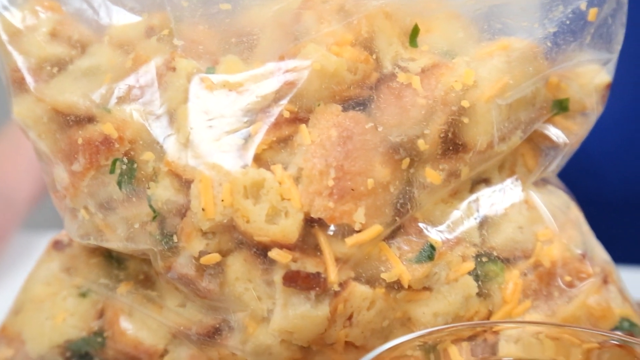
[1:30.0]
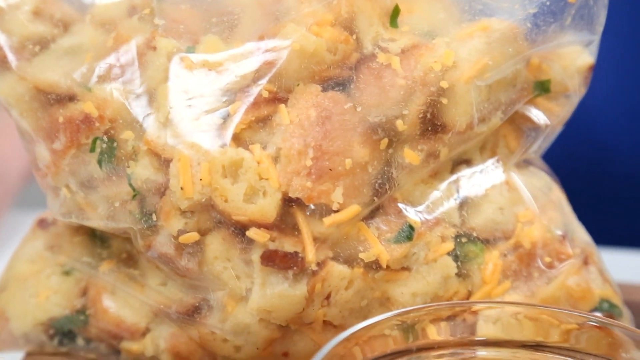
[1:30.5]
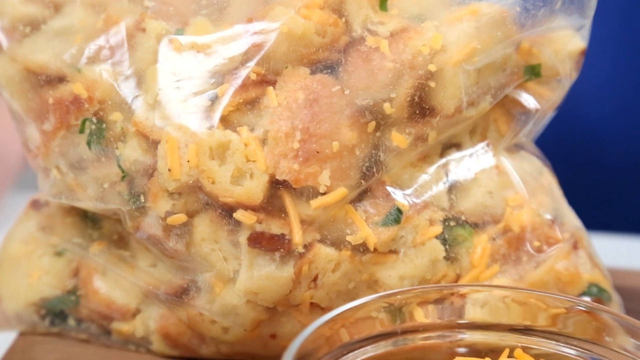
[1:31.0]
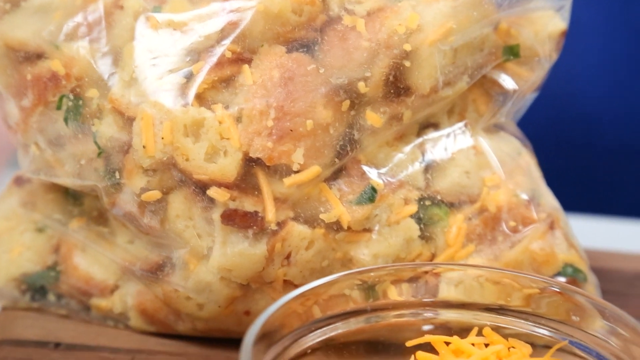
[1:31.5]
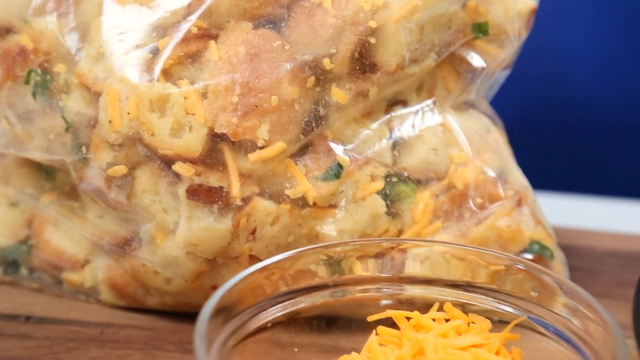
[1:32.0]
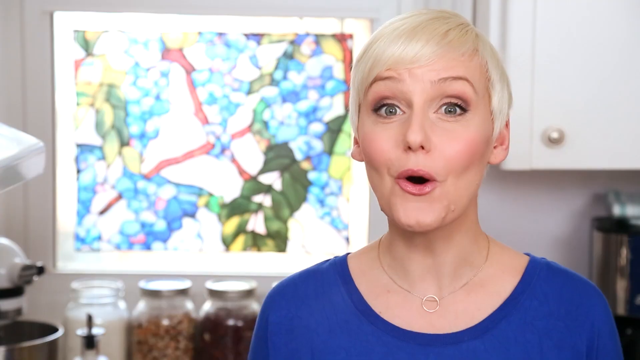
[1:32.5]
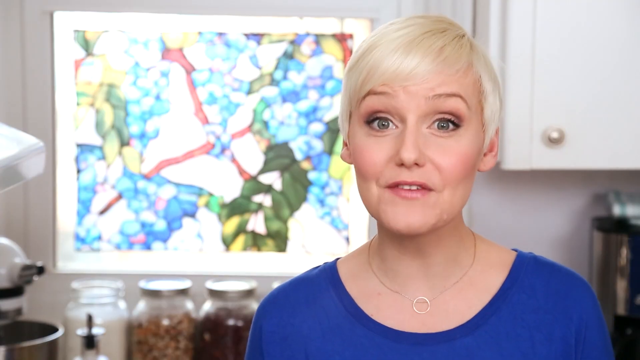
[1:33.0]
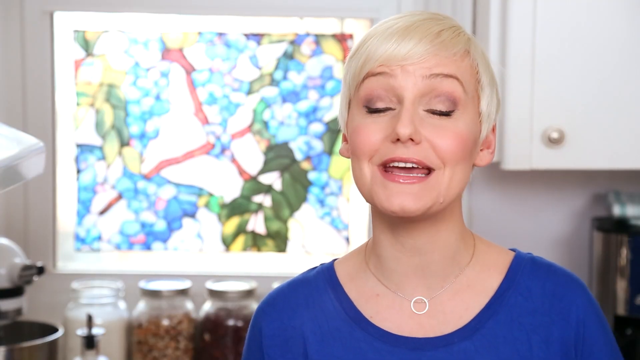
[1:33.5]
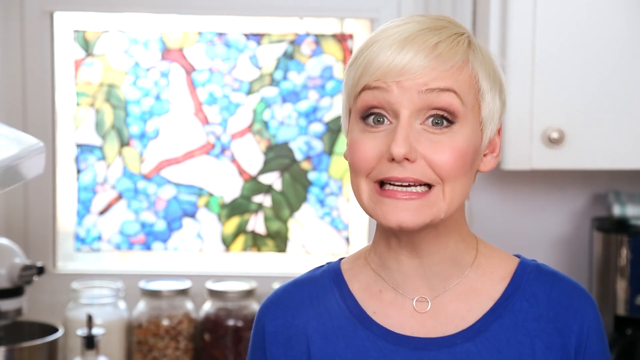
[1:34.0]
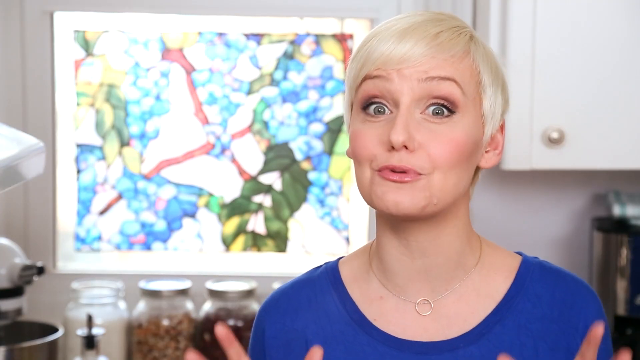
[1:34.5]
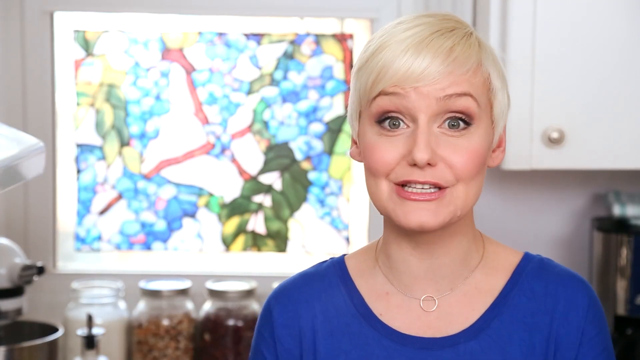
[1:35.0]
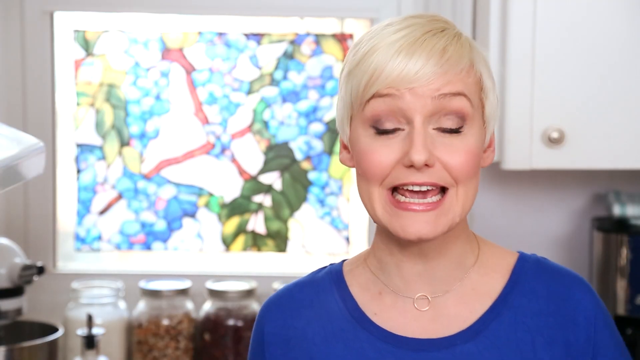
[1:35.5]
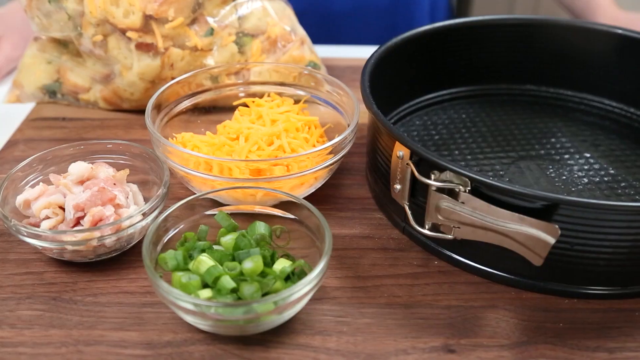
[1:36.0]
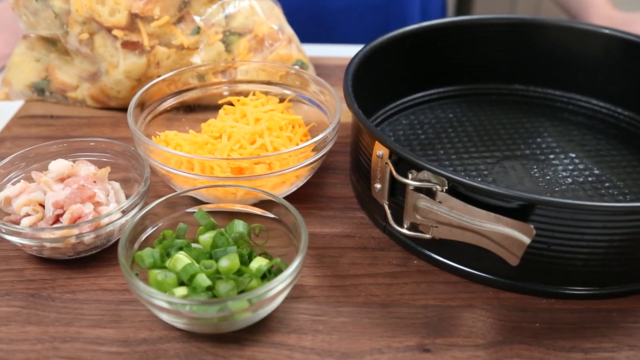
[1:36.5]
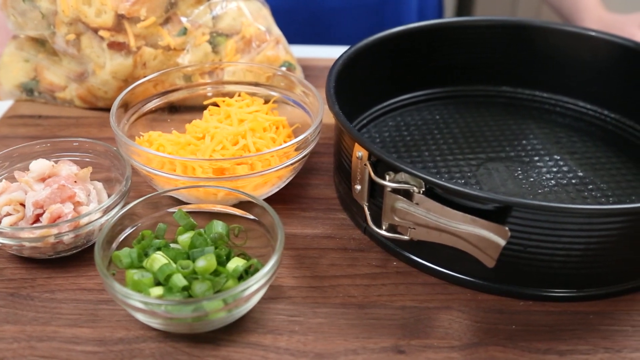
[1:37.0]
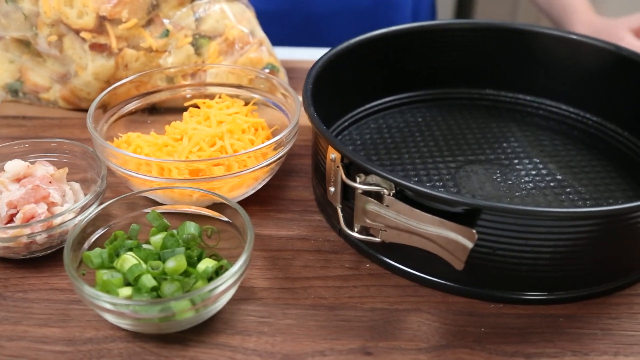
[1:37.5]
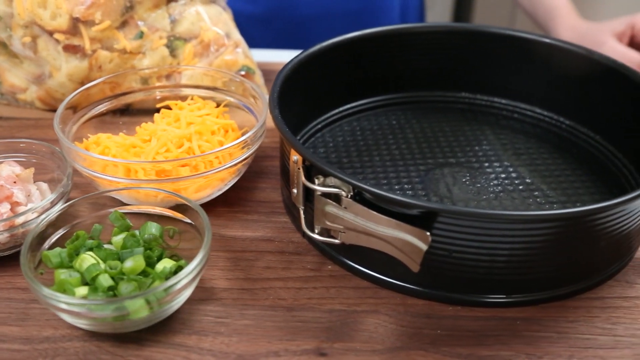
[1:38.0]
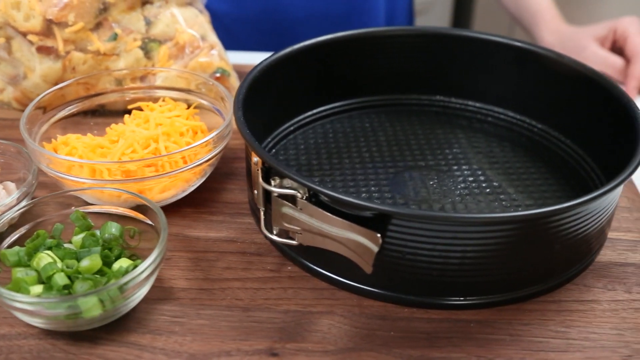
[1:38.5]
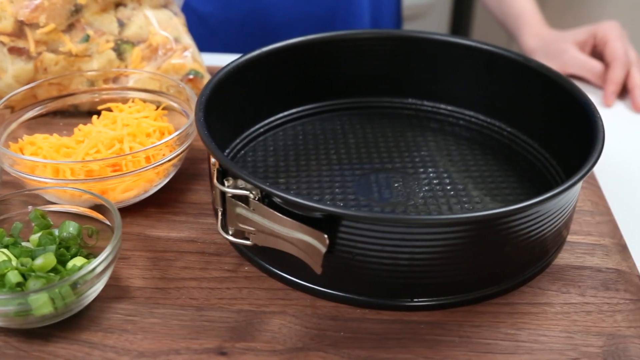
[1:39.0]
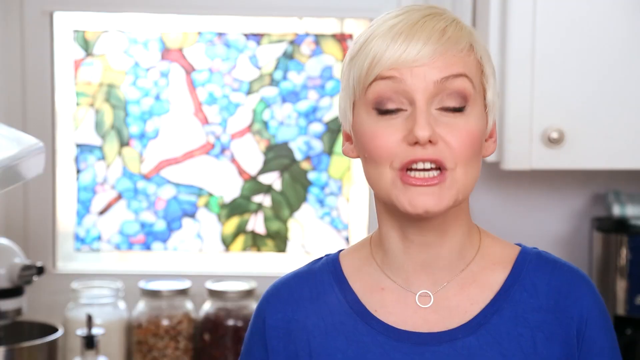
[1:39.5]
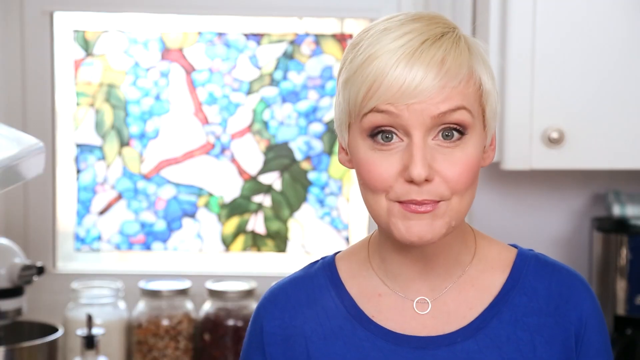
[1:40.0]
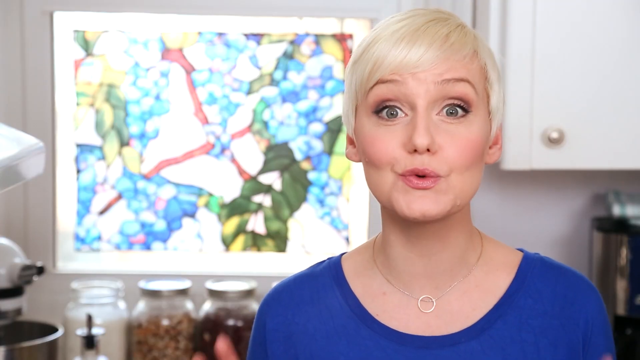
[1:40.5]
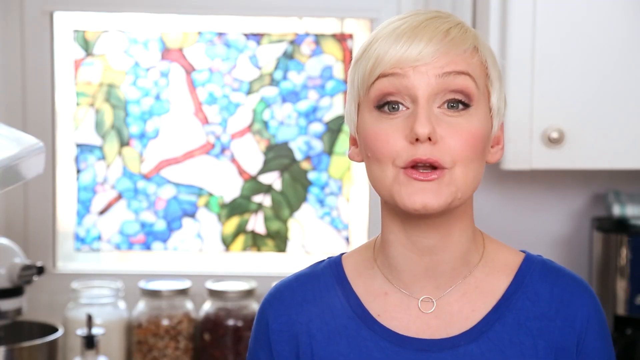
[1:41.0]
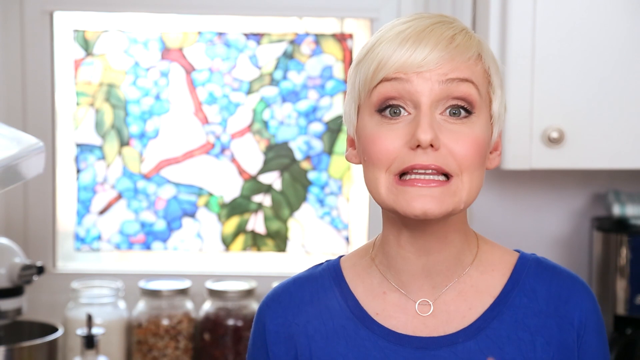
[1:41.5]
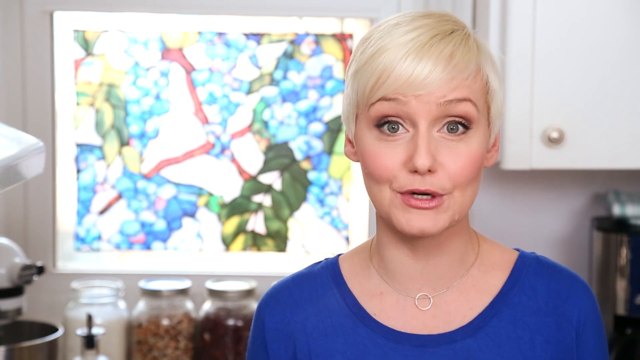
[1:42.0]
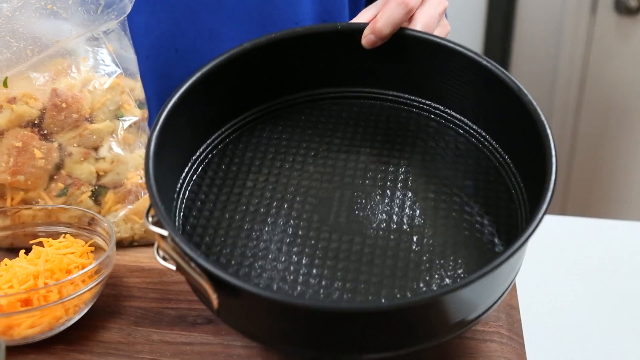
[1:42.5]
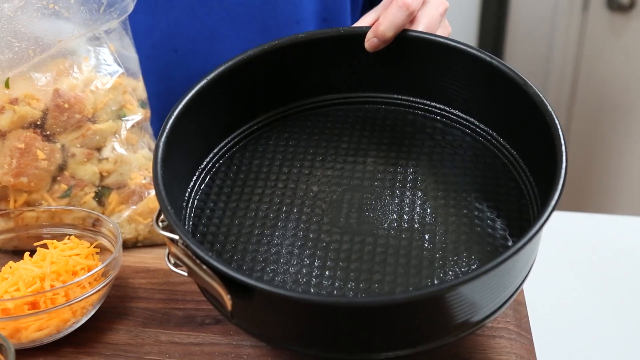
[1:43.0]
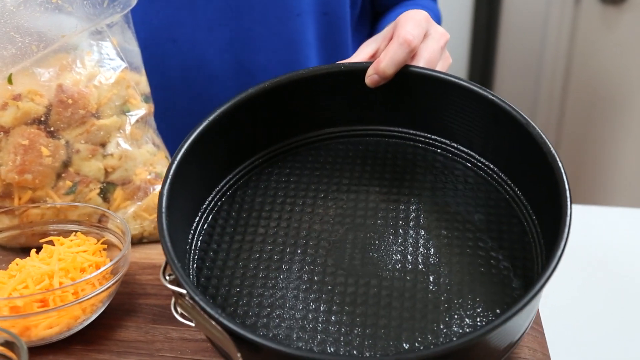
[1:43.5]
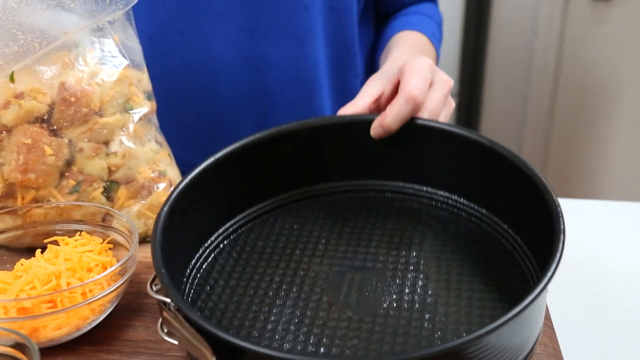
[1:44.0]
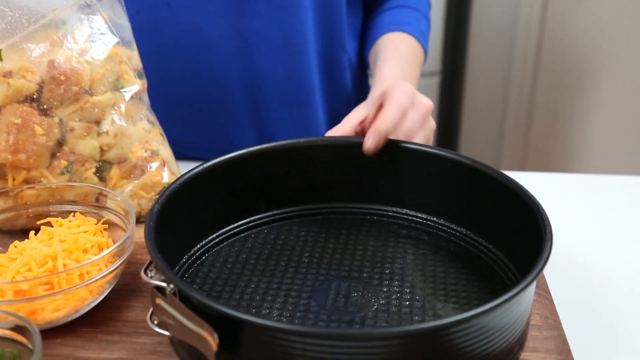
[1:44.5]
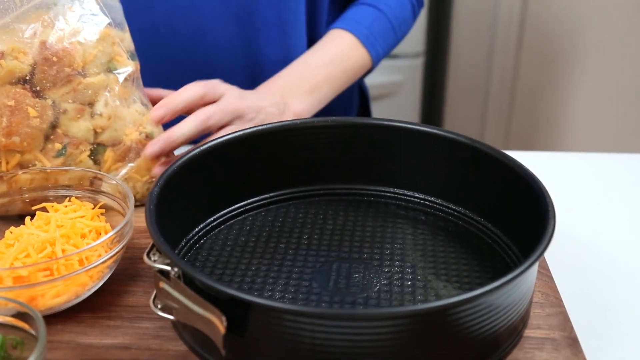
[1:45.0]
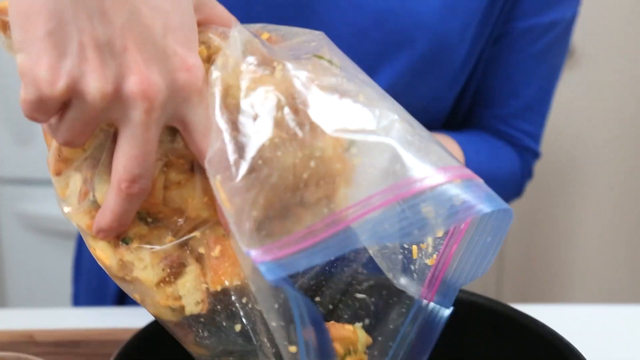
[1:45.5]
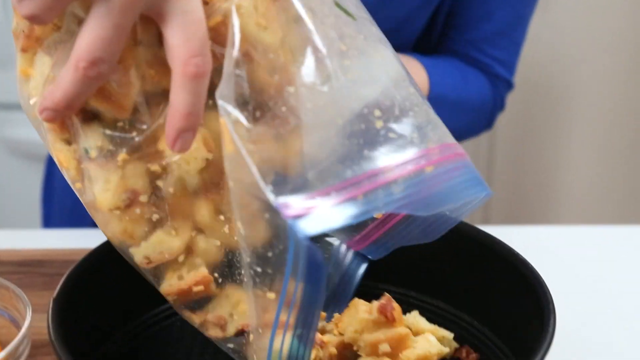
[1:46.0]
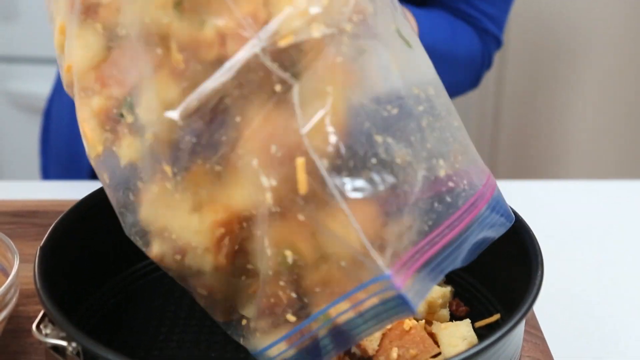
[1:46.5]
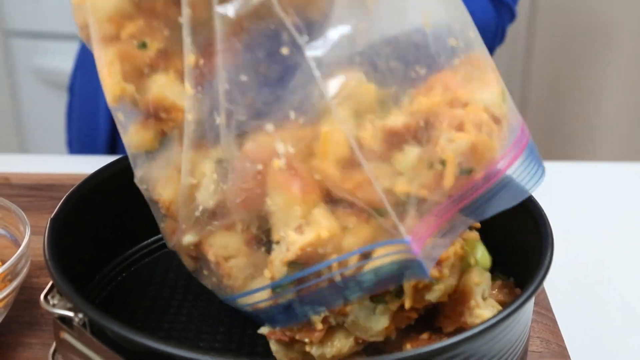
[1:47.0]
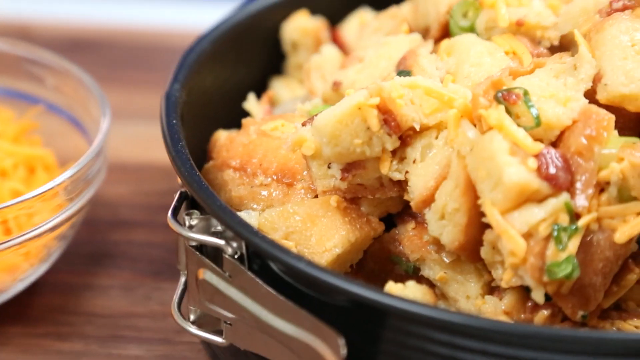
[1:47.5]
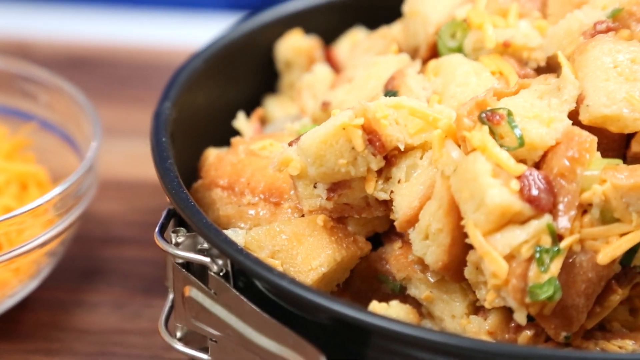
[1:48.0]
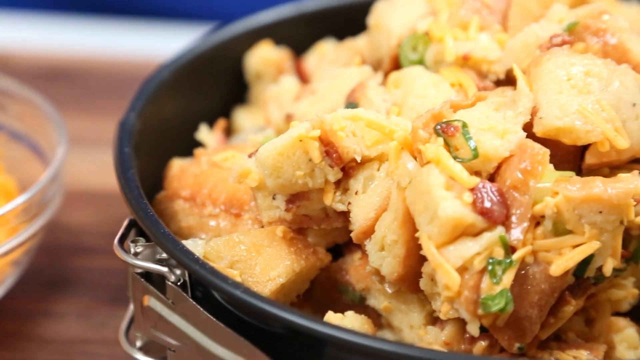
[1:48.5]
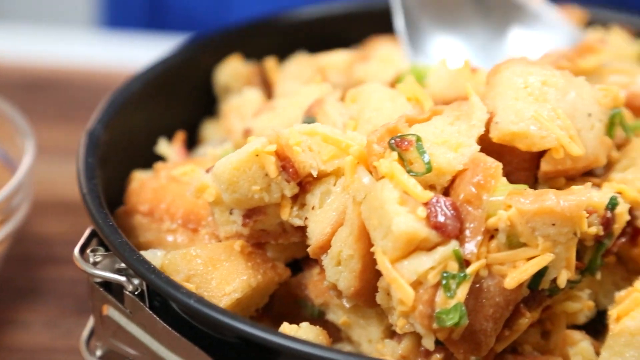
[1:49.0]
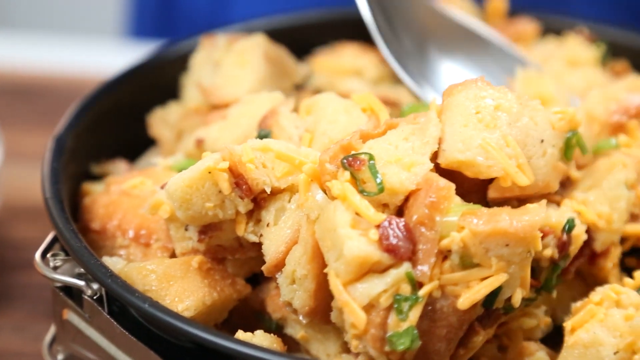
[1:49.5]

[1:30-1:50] A large plastic bag is filled with cubed pieces of bread, some cheese, chives and maybe some type of liquid mixture. A woman speaks briefly; she is a white woman in her mid to late 30s with very platinum blonde, very short hair, wearing a blue top with a kind of circular neckline and a necklace with a circular pendant. She looks to be in a kitchen setting with a stained glass window behind her. Glass bowls of cheese, chives and bacon appear, and the camera pans over to a black baking pan with kind of a silver buckle on the side. The woman speaks again in the kitchen, clearly enunciating her words. The black baking pan, which looks to be kind of oiled on the bottom, appears again as she pours in the contents of the plastic bag, the bread bits, bacon and cheese, which fill the pan completely. She uses a metal spoon to distribute it a little more evenly.